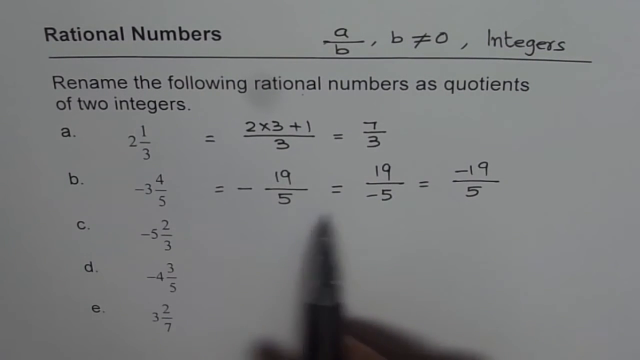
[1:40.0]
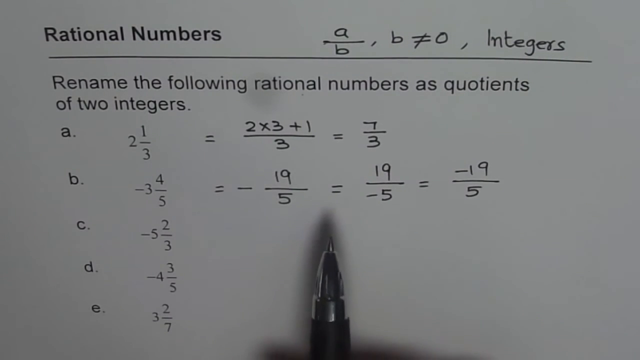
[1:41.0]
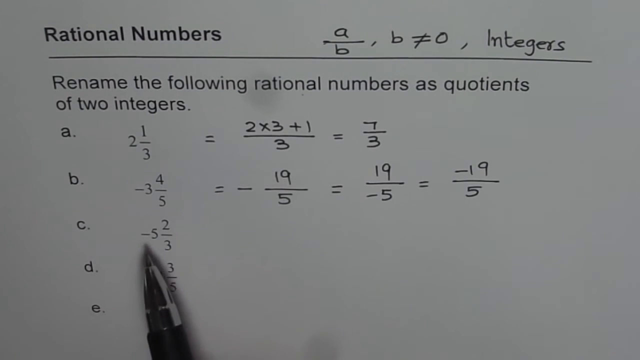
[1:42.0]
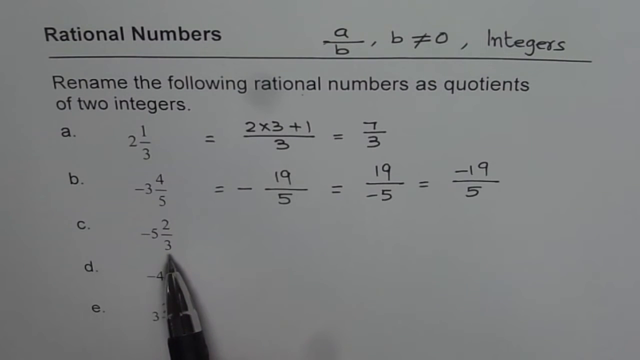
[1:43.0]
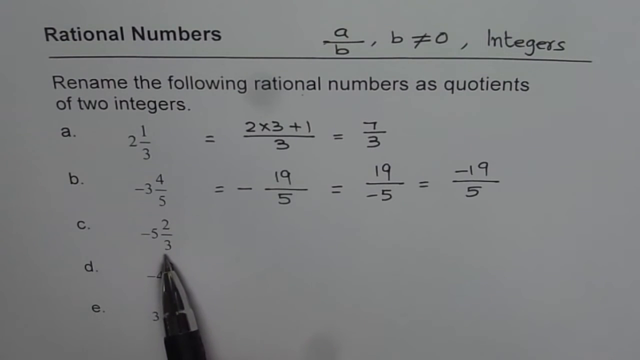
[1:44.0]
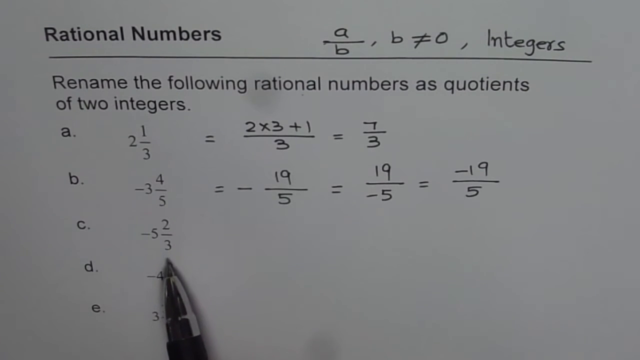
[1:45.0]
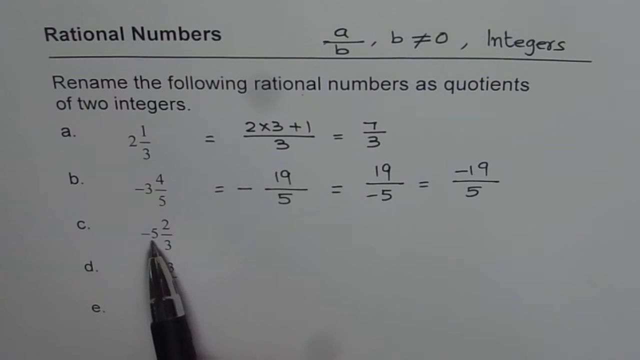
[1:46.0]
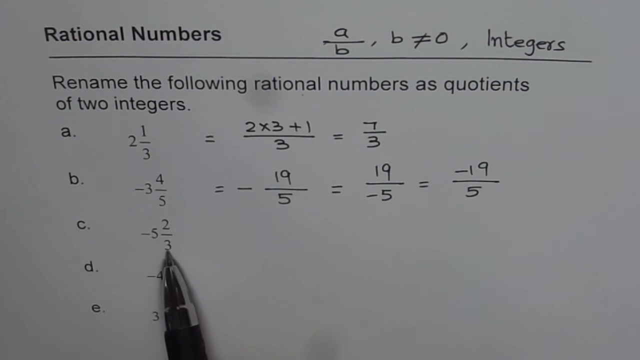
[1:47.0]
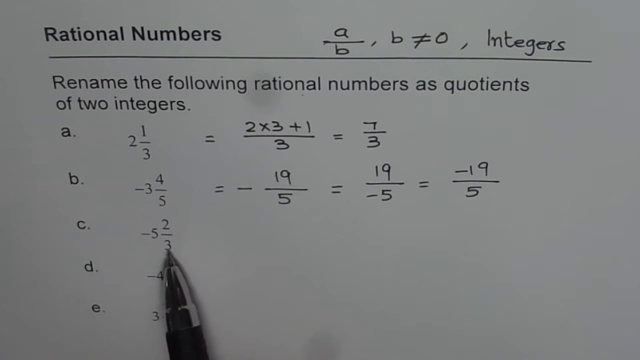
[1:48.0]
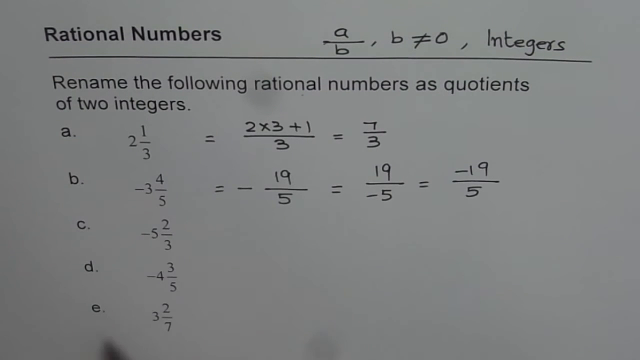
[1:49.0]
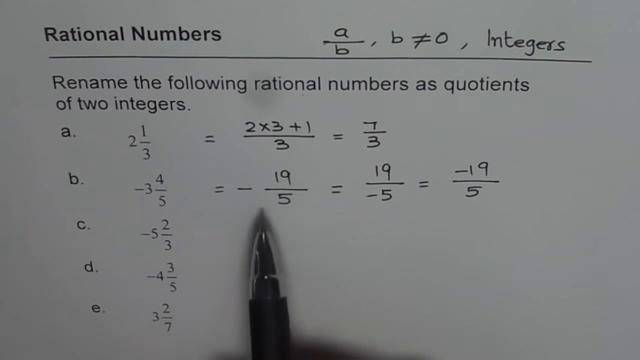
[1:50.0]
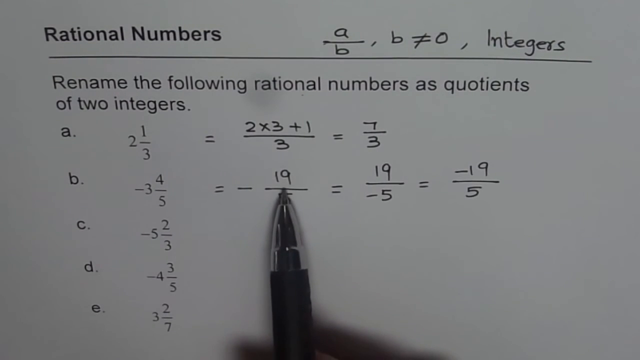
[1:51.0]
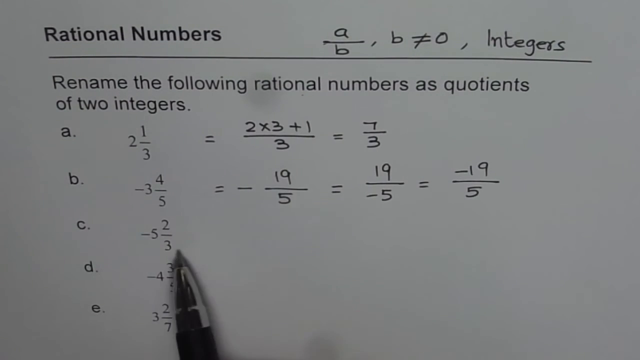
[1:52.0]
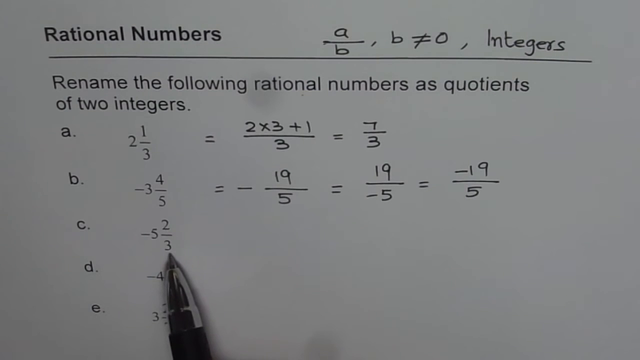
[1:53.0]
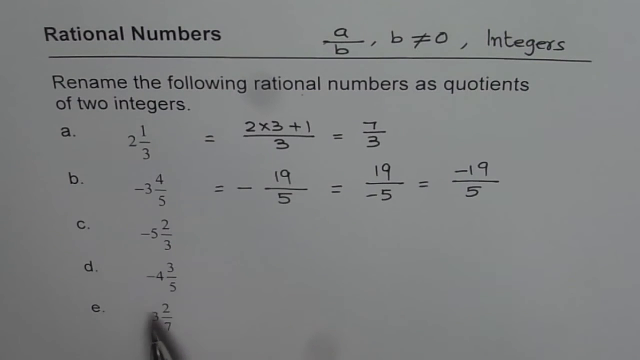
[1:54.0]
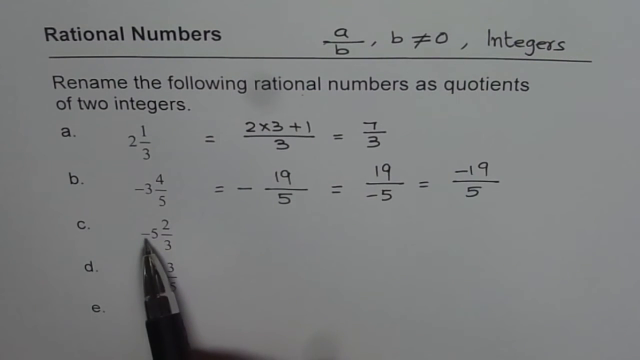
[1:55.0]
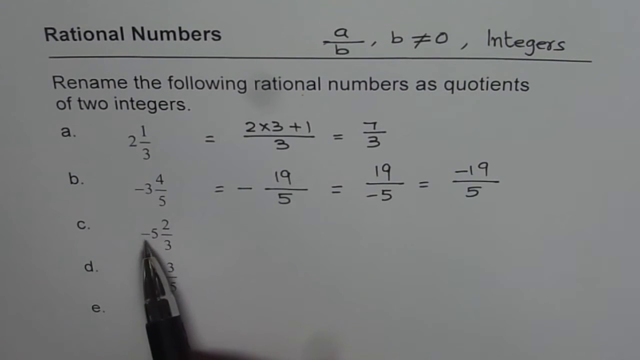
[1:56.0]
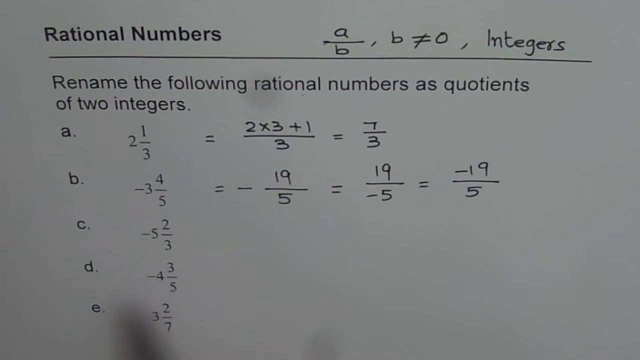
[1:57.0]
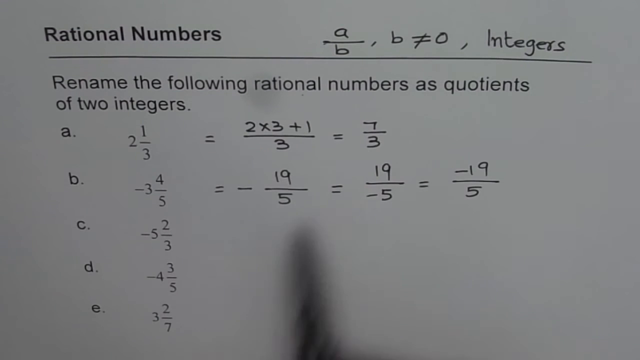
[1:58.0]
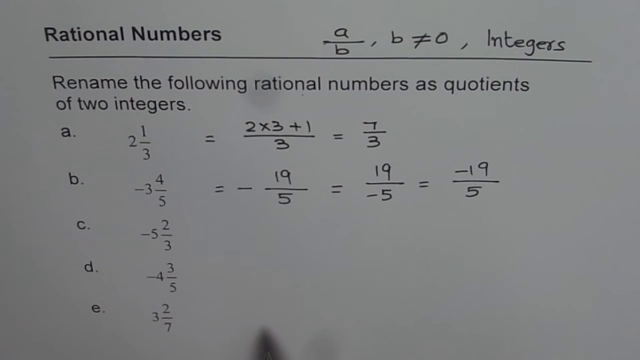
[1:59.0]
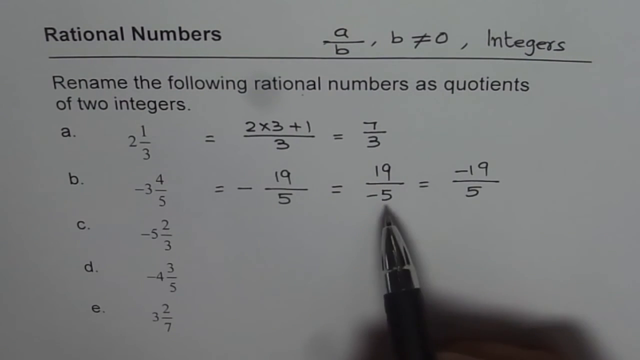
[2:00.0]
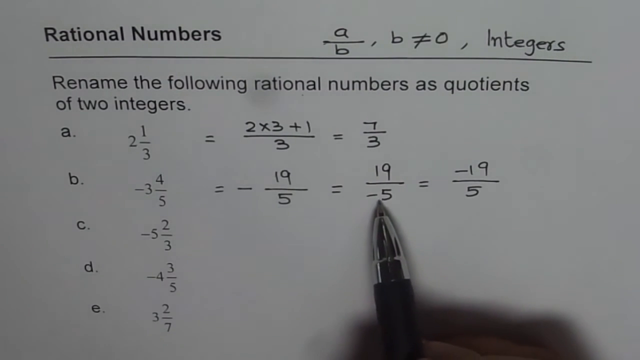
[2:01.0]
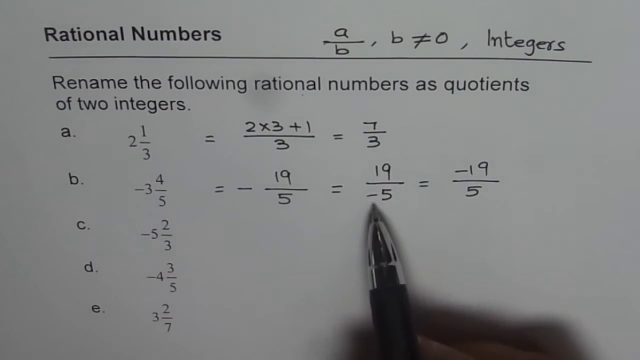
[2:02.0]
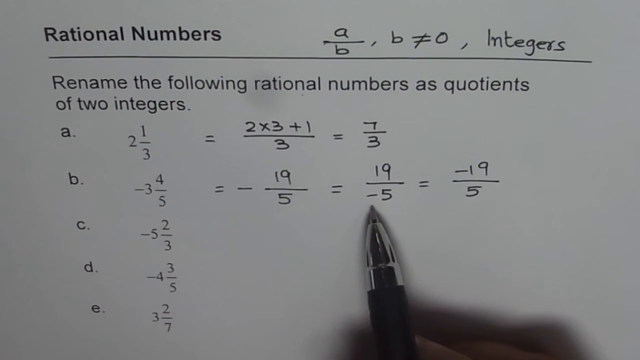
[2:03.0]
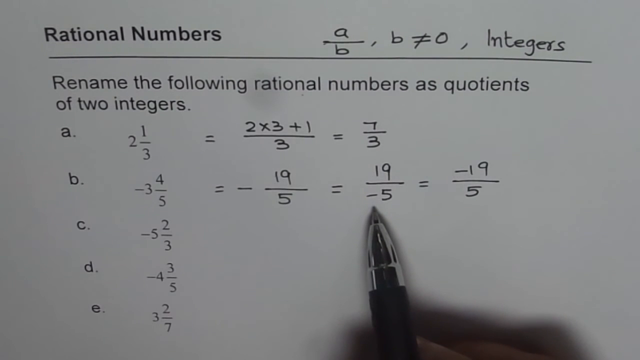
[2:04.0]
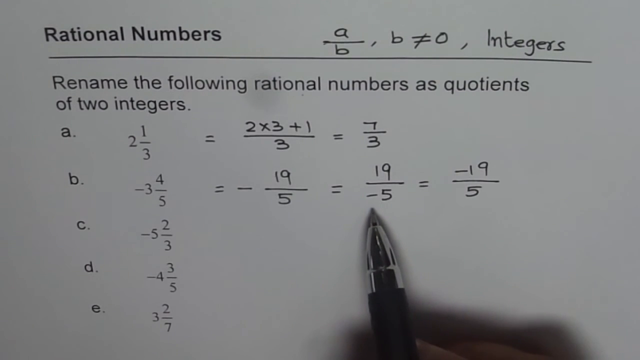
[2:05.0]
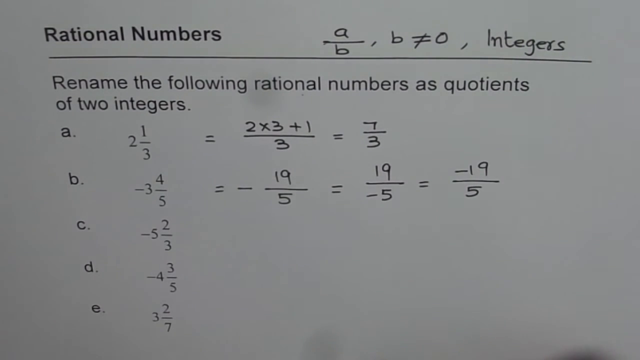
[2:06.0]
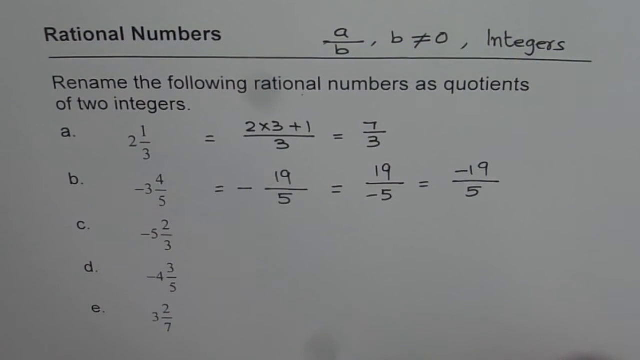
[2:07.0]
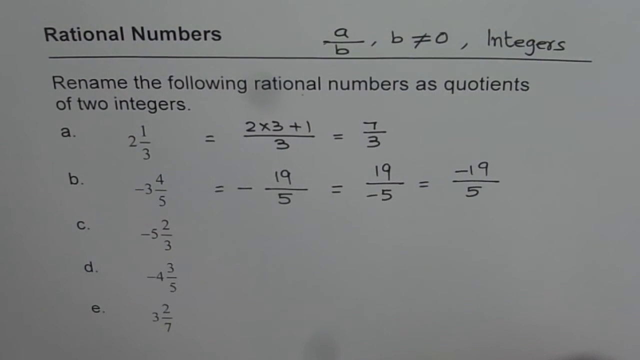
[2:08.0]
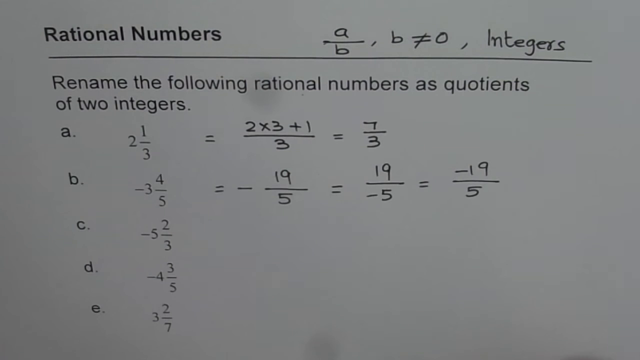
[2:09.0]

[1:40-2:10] The pen moves to option C and points to different parts of the number: the -5, the 3 and the 2. It then points to the 19 written beside option B, returns to option C to point at a few parts again, and goes back to option B, moving back and forth between the two options, seemingly comparing them. The pen then exits the page. Nothing has been written beside option C; the person appears to be demonstrating the differences between the breakdown of option B and how option C can be processed.